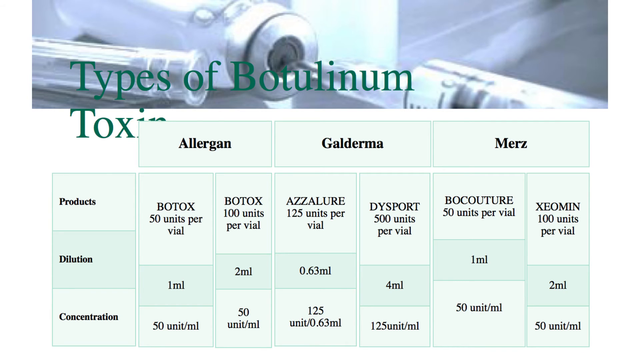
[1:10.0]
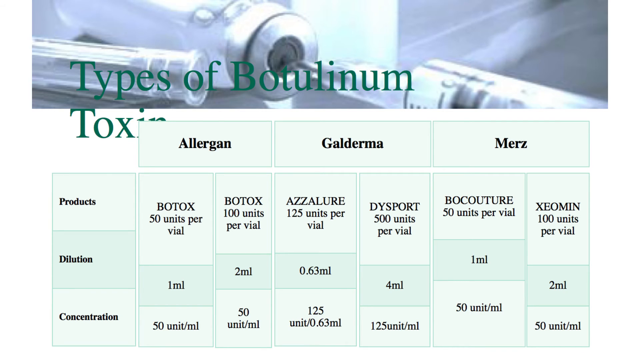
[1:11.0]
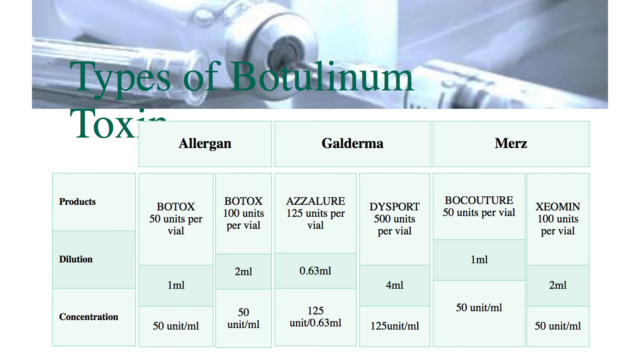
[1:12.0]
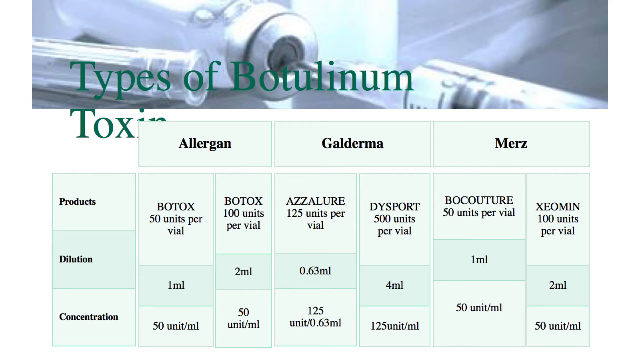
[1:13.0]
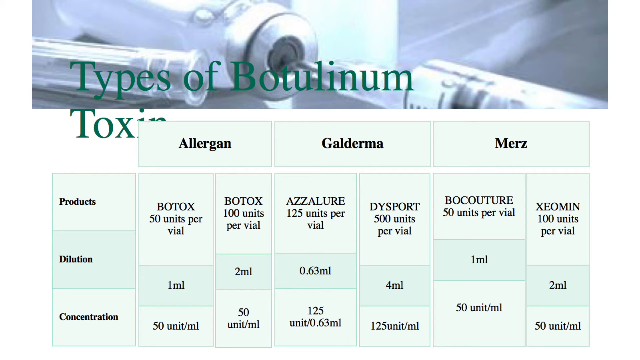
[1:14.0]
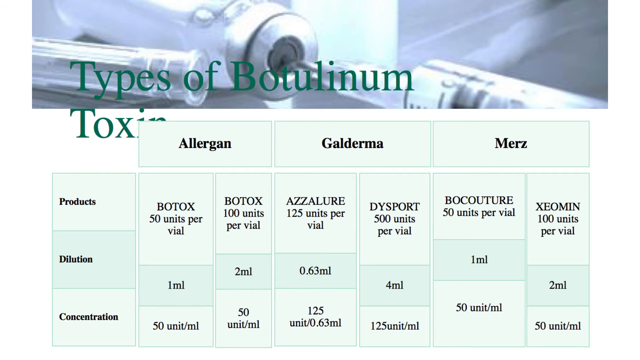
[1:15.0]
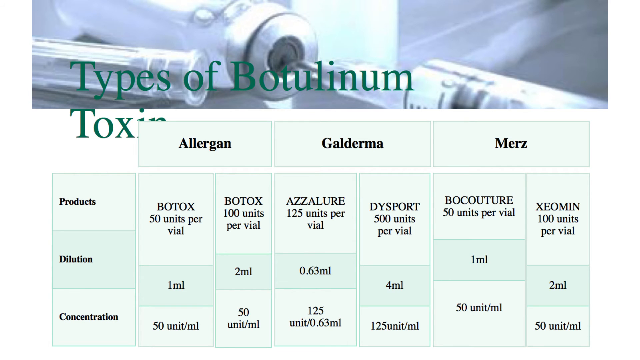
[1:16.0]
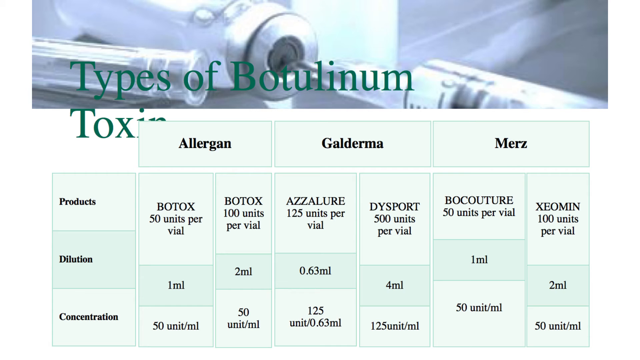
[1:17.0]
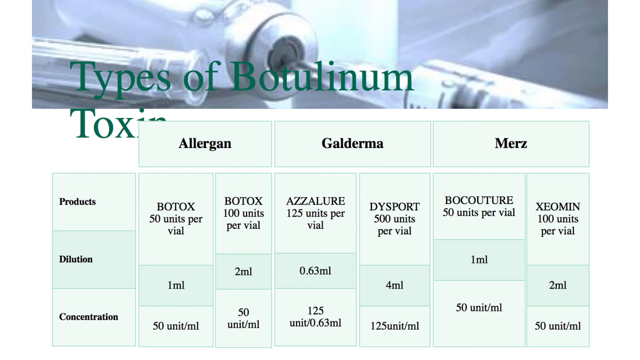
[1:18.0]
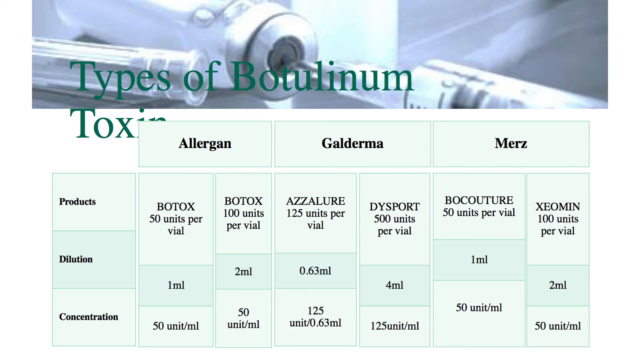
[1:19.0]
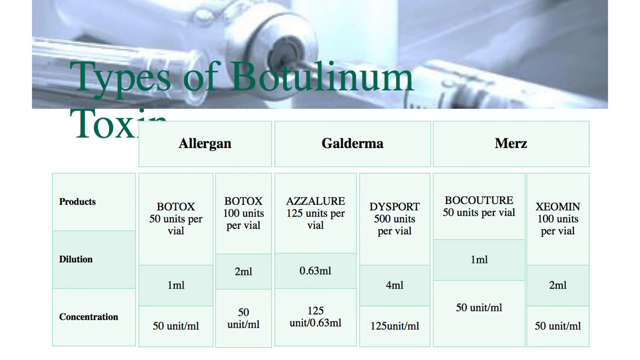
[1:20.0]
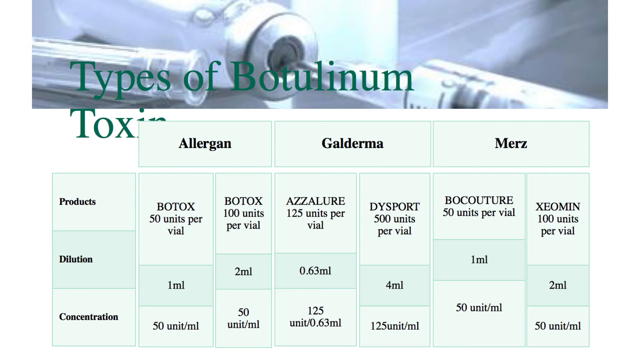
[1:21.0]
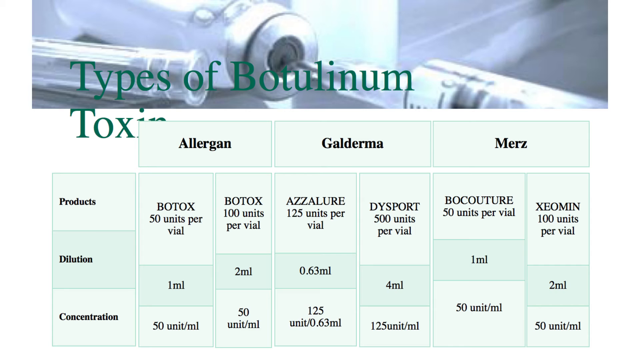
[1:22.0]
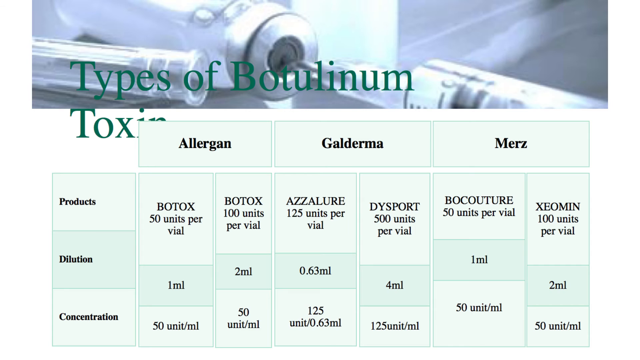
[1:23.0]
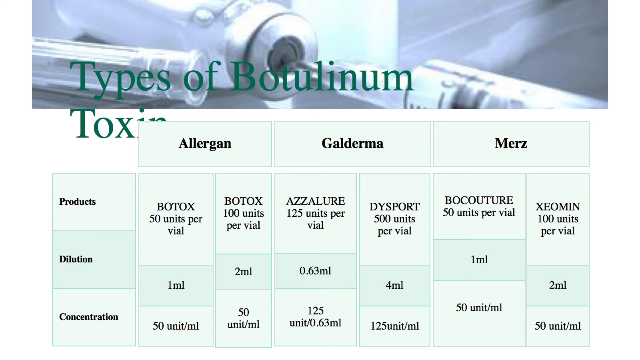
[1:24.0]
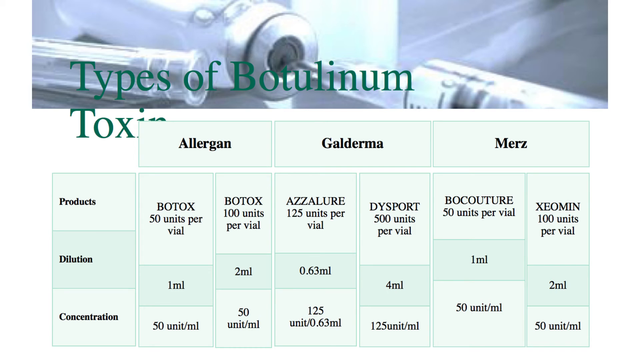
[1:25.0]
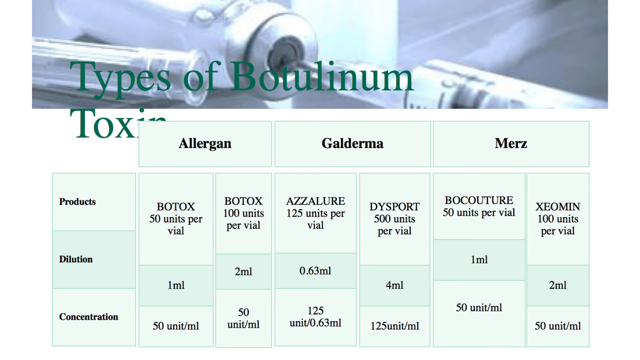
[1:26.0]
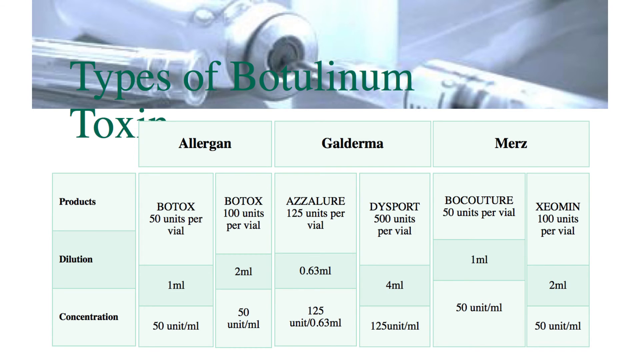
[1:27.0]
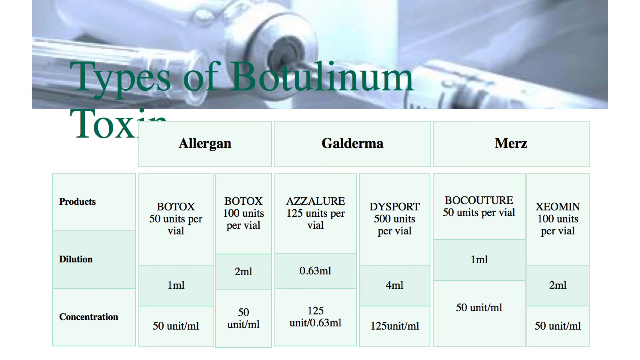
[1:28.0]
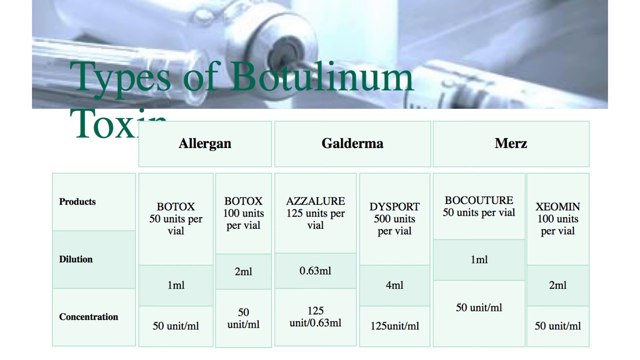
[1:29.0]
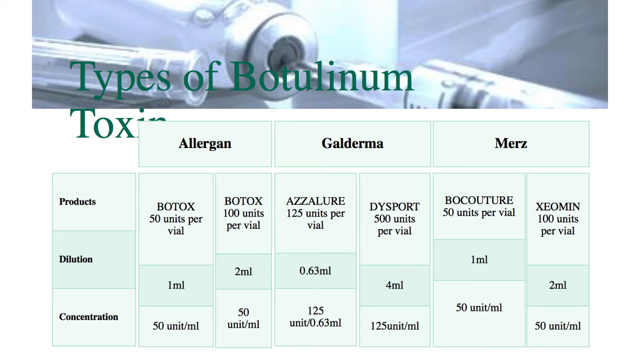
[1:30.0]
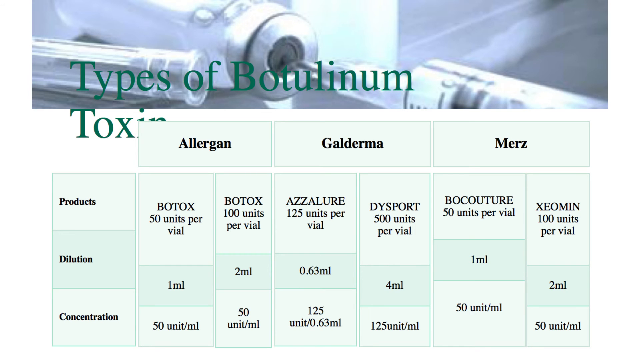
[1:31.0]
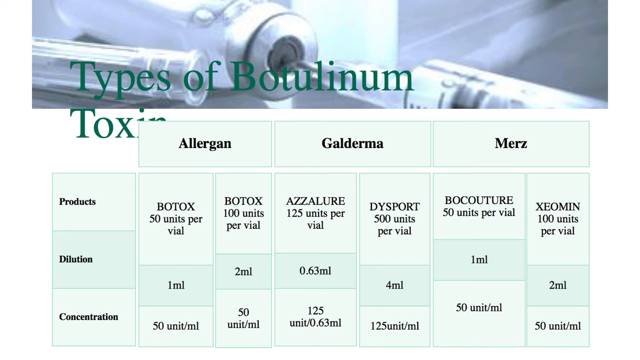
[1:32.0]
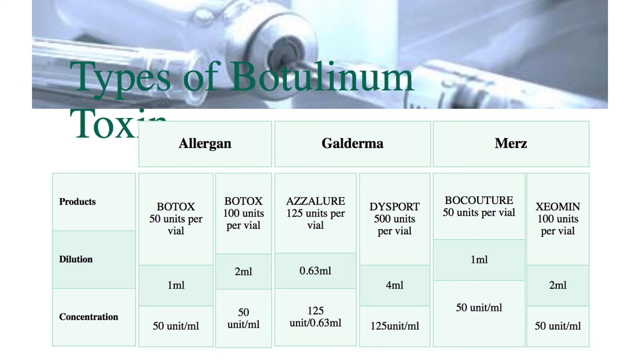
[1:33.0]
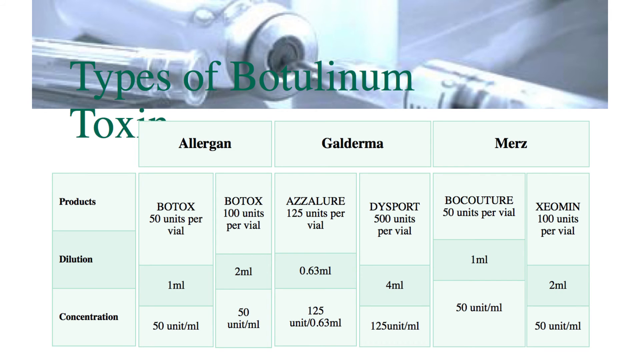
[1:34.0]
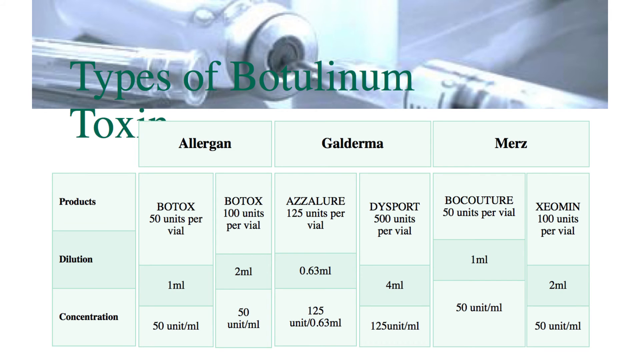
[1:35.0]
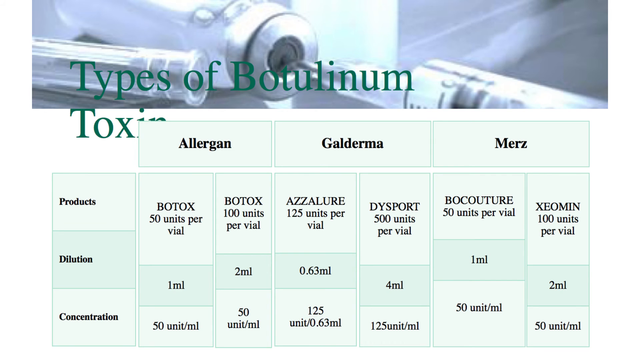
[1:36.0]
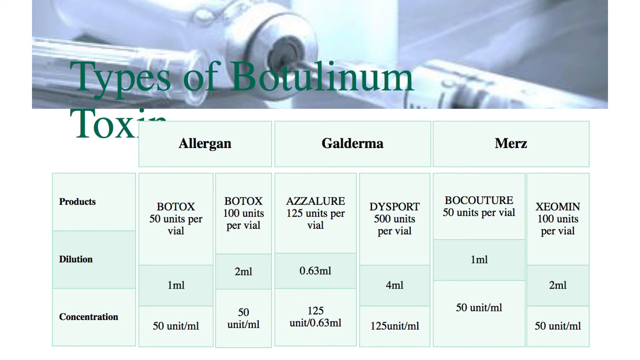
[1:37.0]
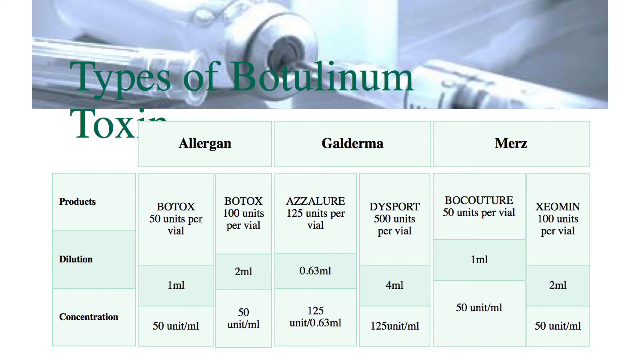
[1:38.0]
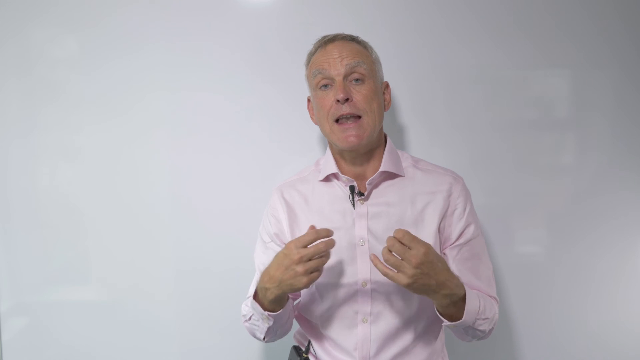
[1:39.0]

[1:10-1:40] A chart is titled "types of botulism toxin" in dark green on top. A header image looks like a syringe going into a small glass jar with some kind of liquid inside. Underneath, labels run down the left side for Products, Dilution and Concentration, and labels across the top name Allergan, Galderma and Merz. Measurements for each product, given in milliliters, fill the chart. The video stays on this screen for a little while, then changes to an older white man standing in front of a white wall in a light pink button-up shirt, seen from the waist up. He has light gray hair that is somewhat whiter on the sides and darker on top. He holds his hands up in front of him, then brings them together in front of him in something like a clapping motion. His large blue eyes are visible, and his eyebrows are raised very high as he speaks.